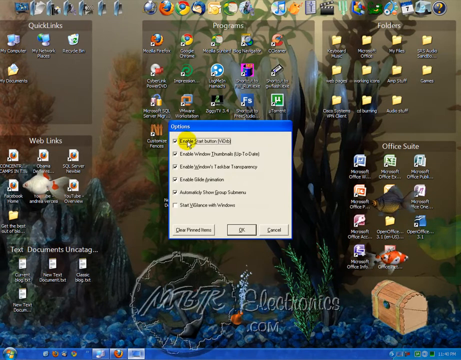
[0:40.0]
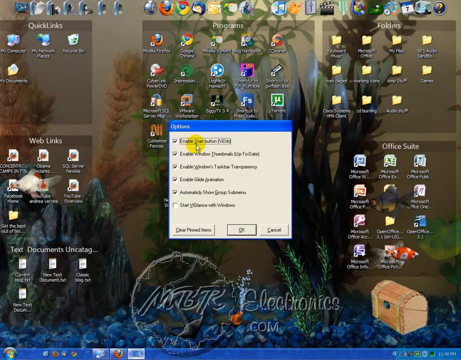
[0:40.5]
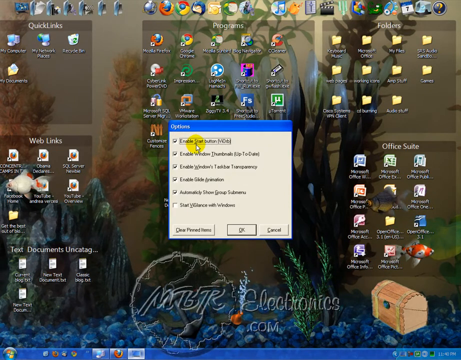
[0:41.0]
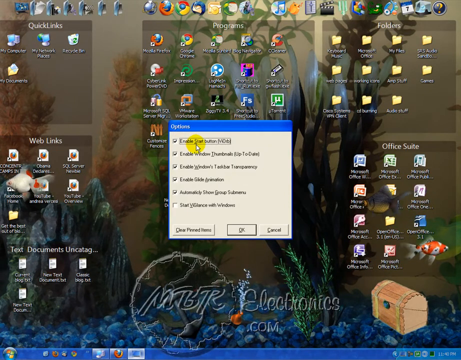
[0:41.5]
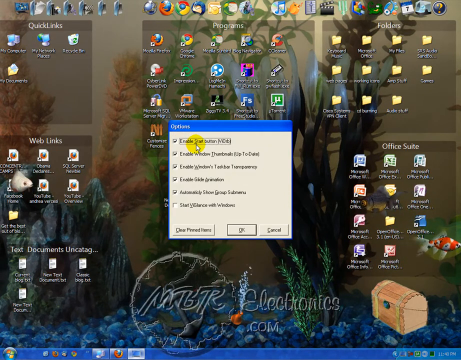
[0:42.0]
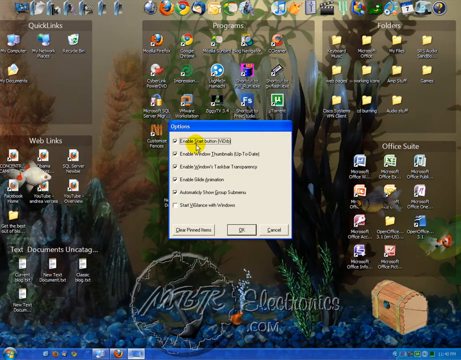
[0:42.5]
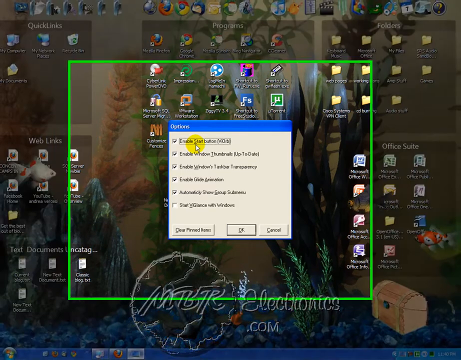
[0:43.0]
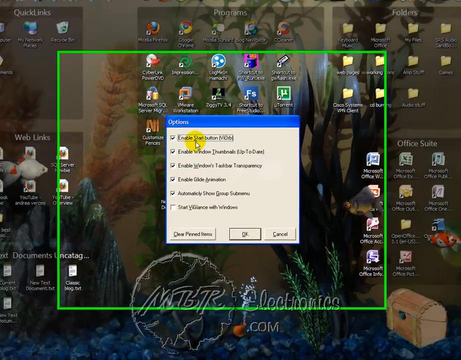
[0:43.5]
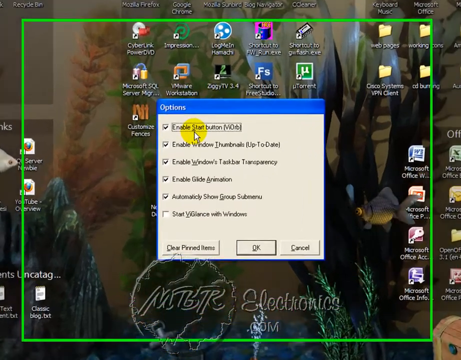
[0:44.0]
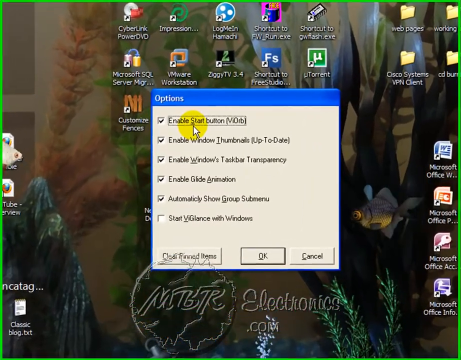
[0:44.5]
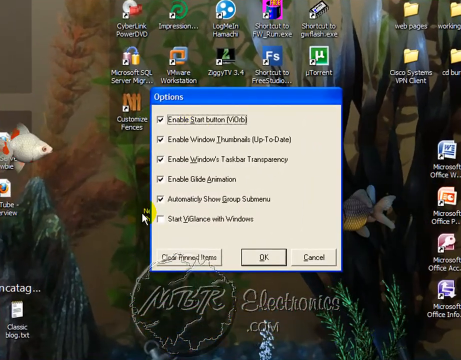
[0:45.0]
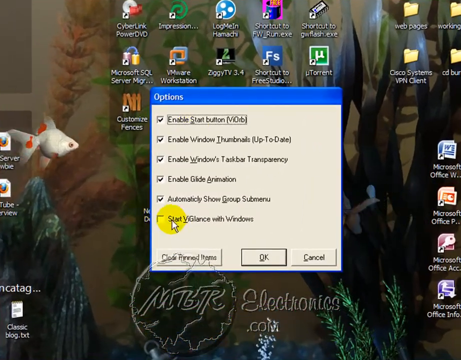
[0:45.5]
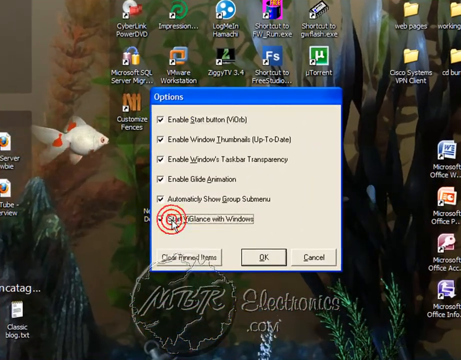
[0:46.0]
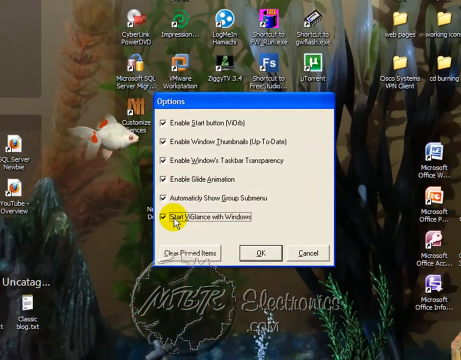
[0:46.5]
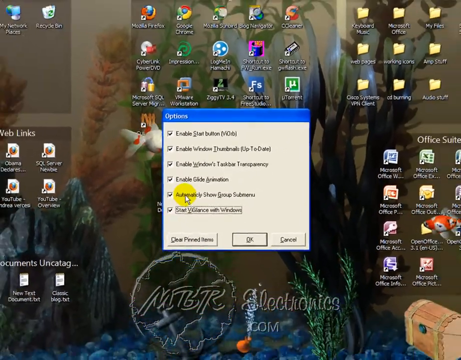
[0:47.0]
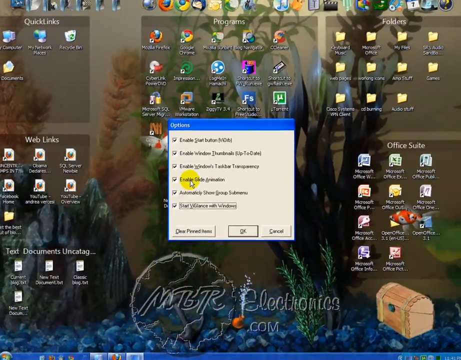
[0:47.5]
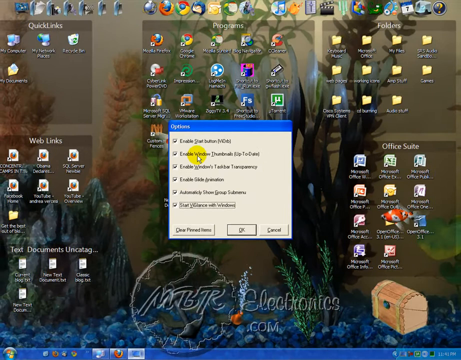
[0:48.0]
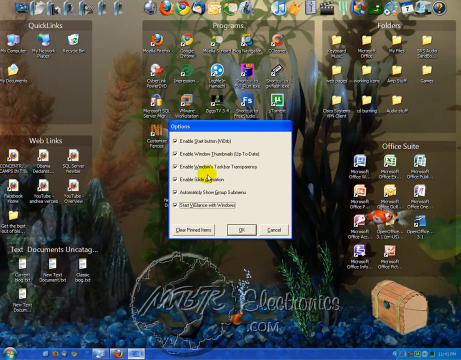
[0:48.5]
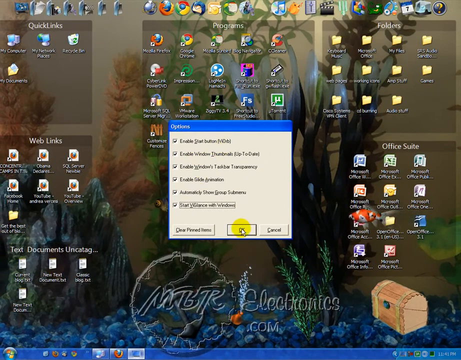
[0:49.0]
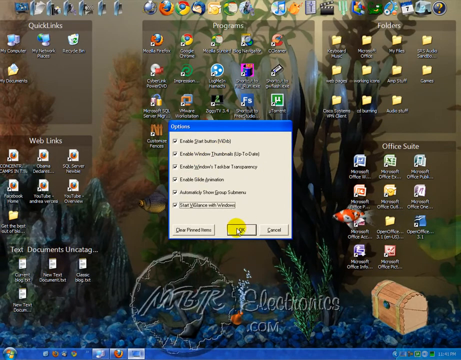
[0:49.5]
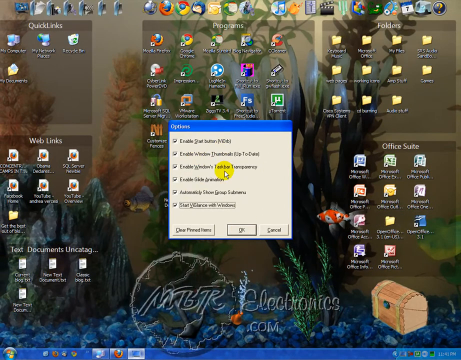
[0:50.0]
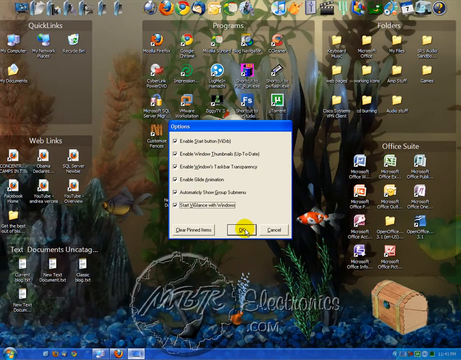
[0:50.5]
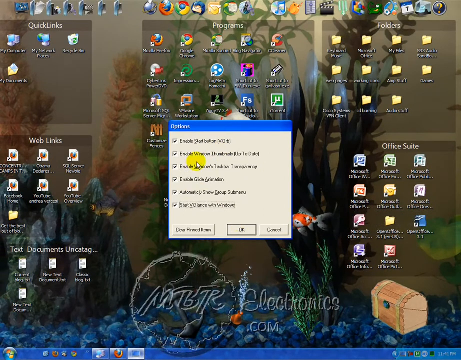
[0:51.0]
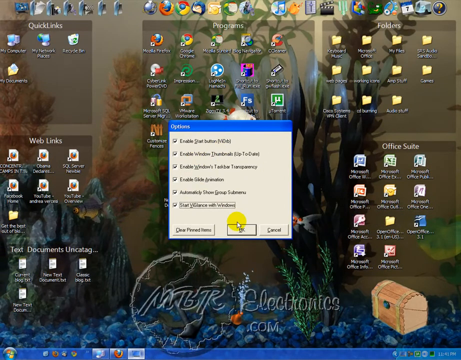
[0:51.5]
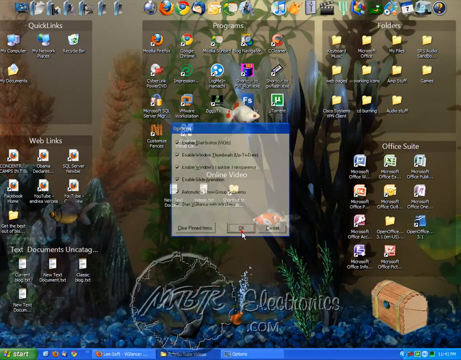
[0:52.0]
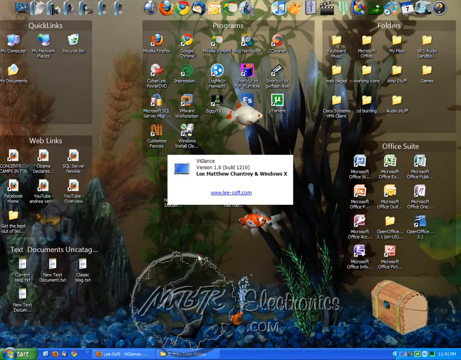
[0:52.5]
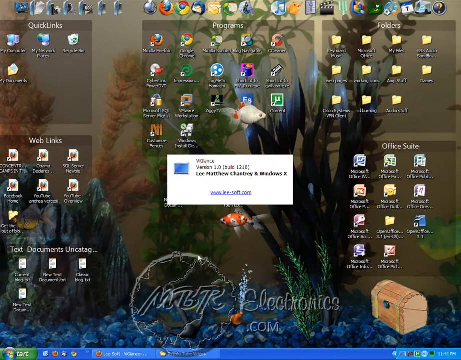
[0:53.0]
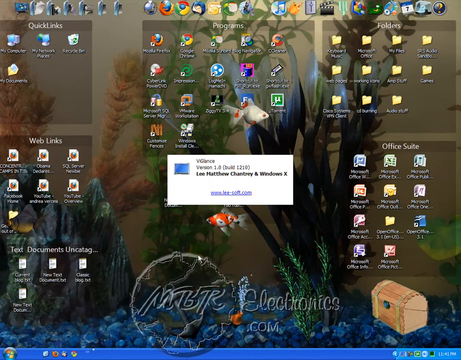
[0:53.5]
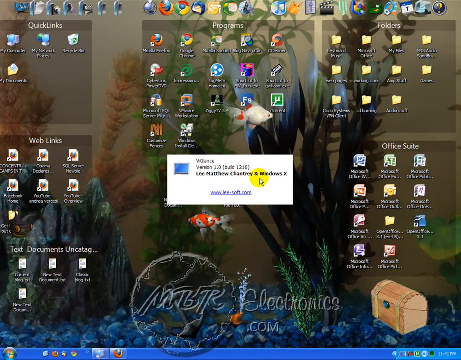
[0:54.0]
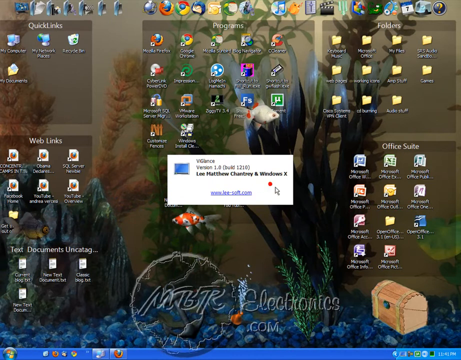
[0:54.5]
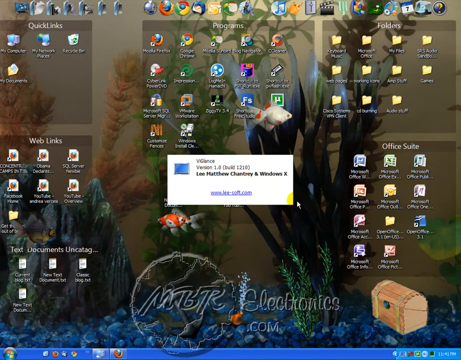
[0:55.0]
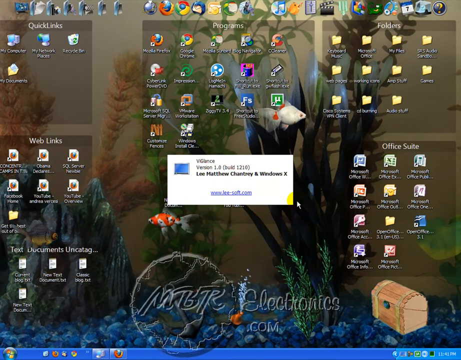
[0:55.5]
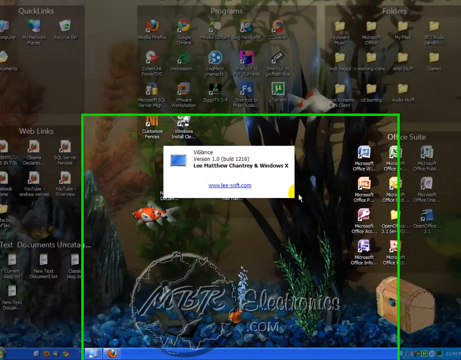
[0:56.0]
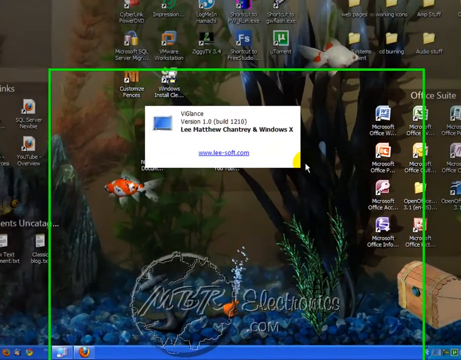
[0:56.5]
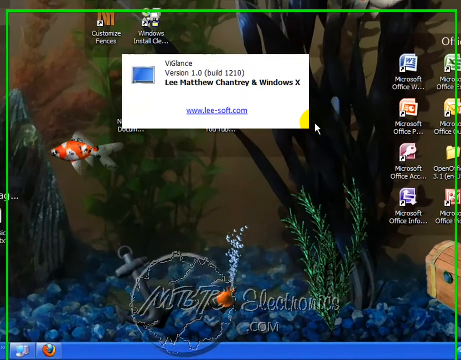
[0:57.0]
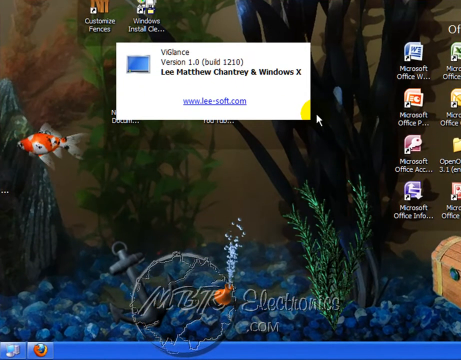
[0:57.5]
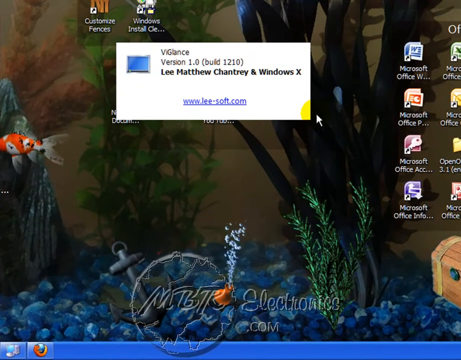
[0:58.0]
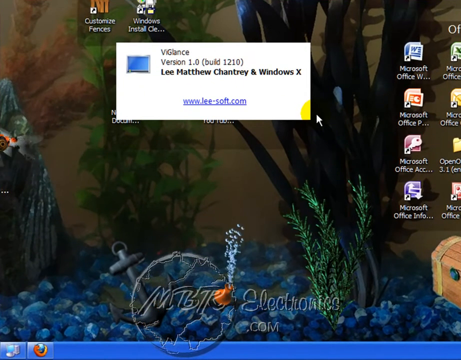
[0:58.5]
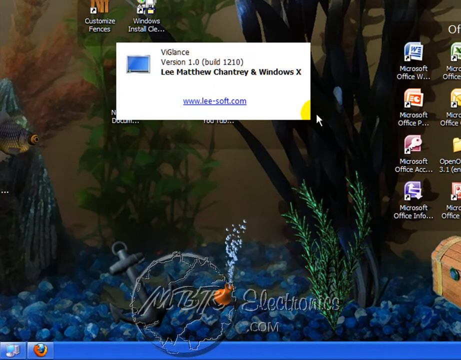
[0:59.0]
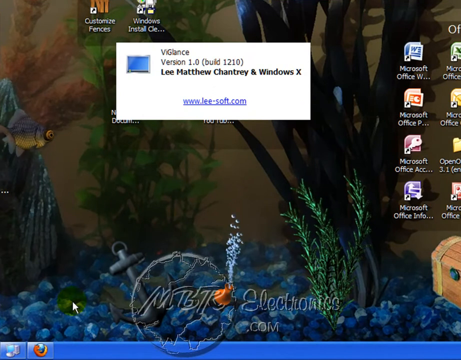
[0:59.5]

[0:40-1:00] The video quality is very low and the small words cannot be read, but the user looks like he is downloading a version of Windows on his laptop. Many icons are displayed on the live wallpaper, including quick links, web links, office suites and other folders. The live wallpaper has moving fish: one is brown, another is orange with white spots, and another is white with orange spots. There are plants of different colors, one green and another that appears to be orange, and there is a treasure box on the live wallpaper. The user continues working on his icons and looks like he wants to download something.